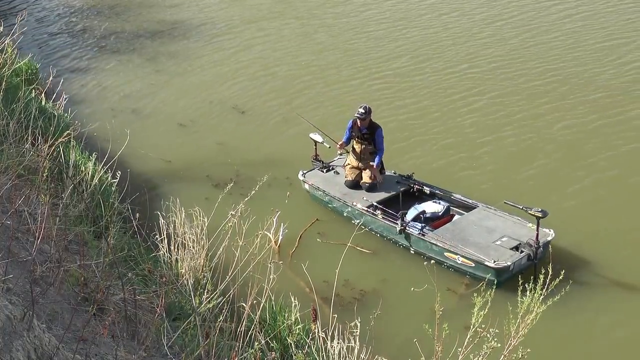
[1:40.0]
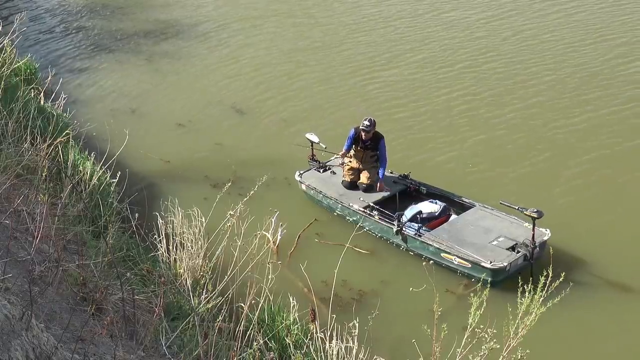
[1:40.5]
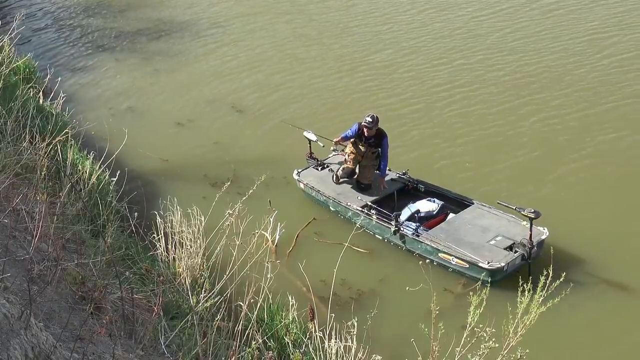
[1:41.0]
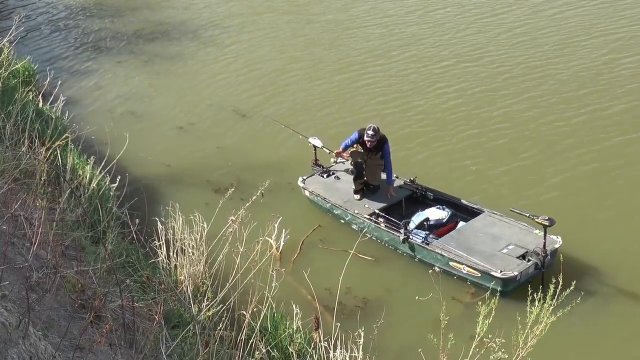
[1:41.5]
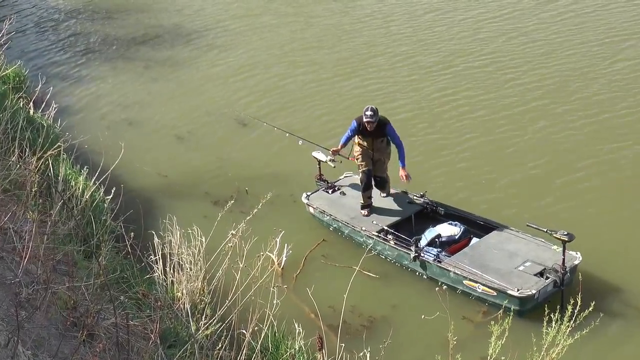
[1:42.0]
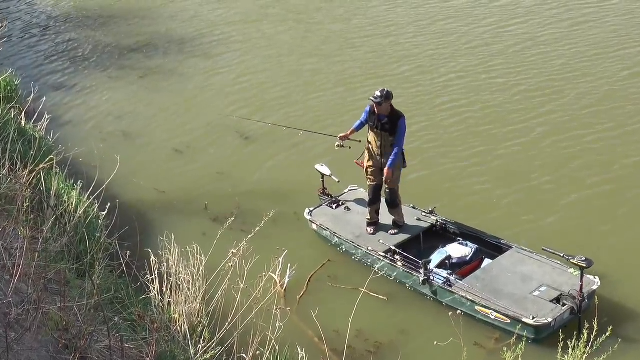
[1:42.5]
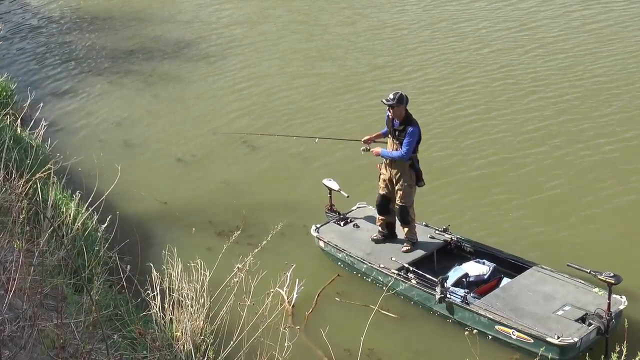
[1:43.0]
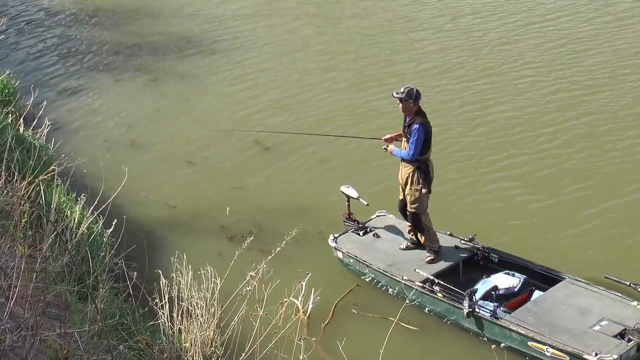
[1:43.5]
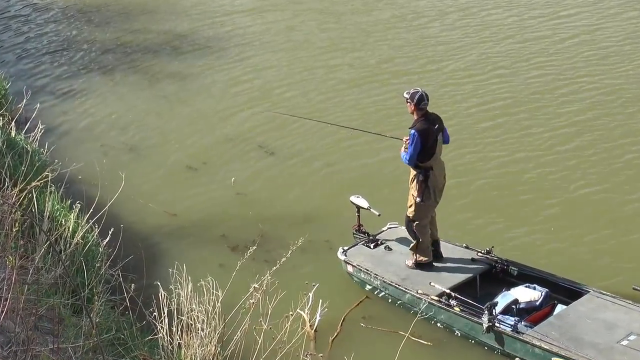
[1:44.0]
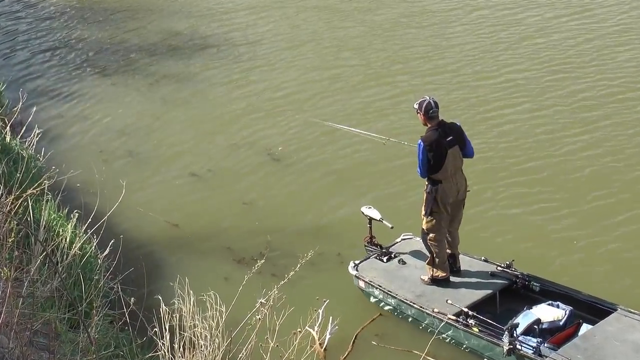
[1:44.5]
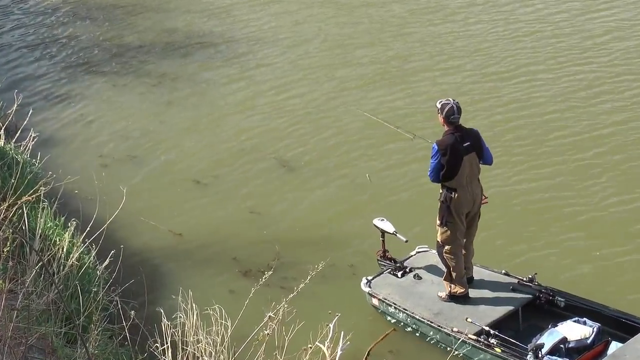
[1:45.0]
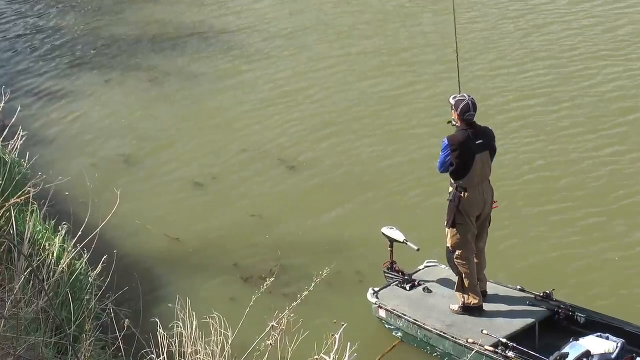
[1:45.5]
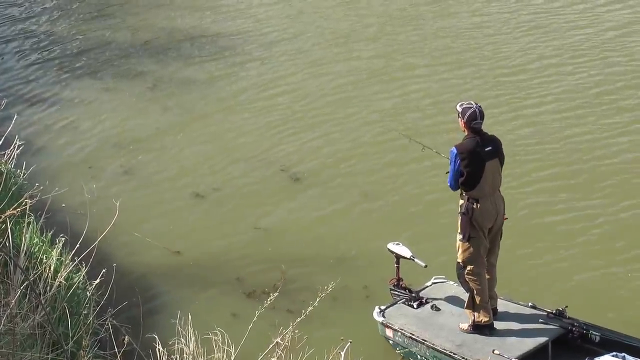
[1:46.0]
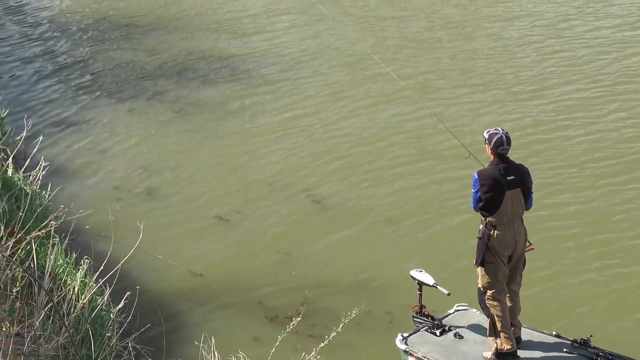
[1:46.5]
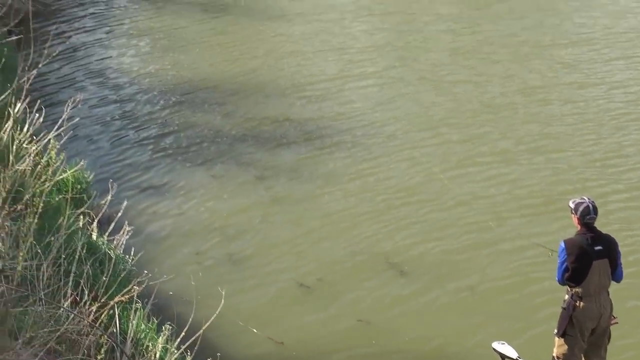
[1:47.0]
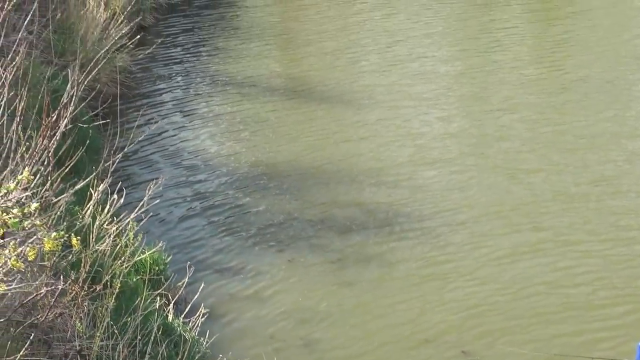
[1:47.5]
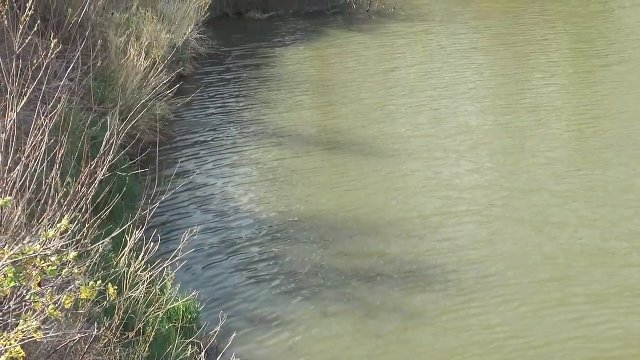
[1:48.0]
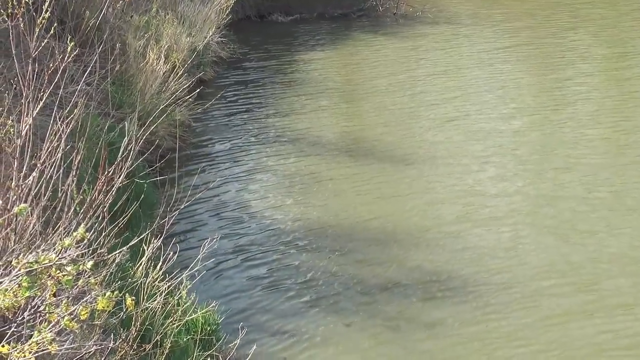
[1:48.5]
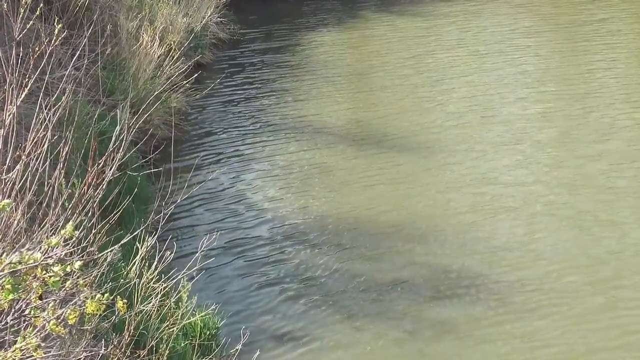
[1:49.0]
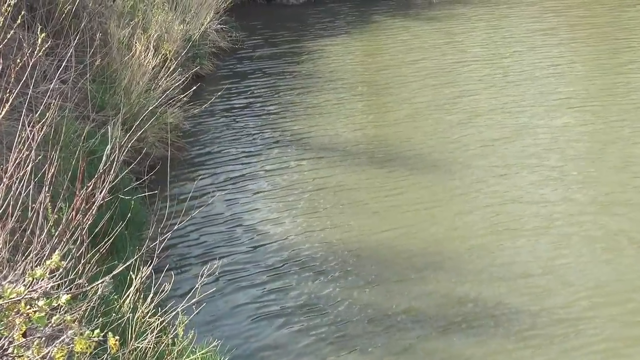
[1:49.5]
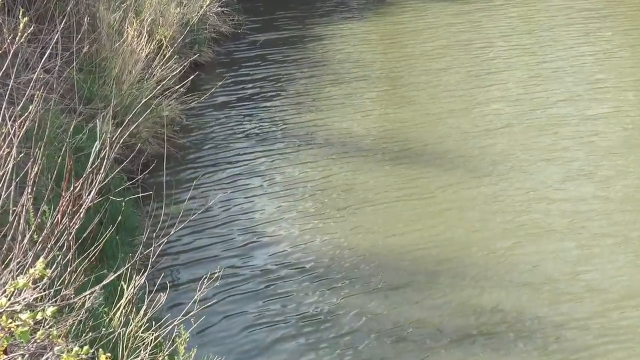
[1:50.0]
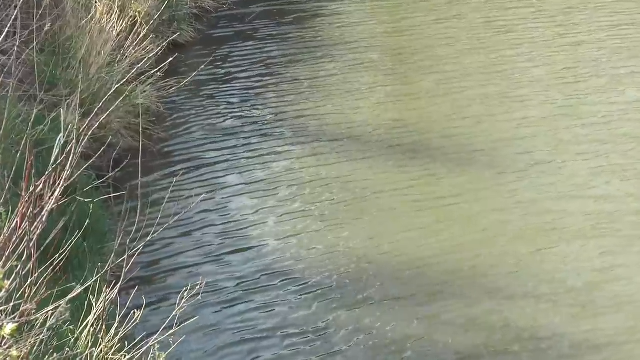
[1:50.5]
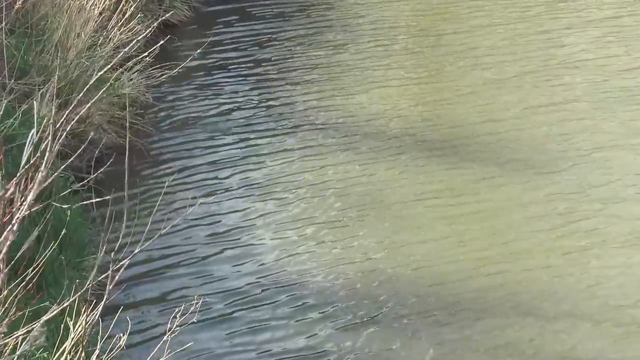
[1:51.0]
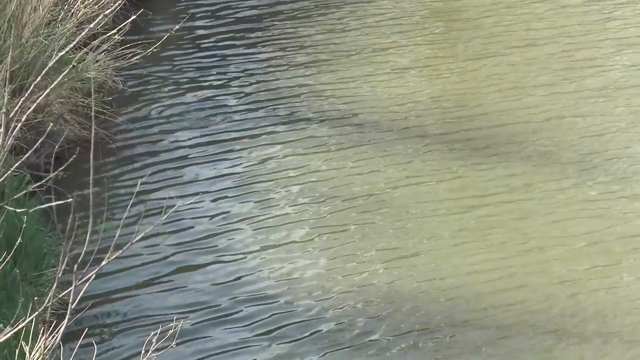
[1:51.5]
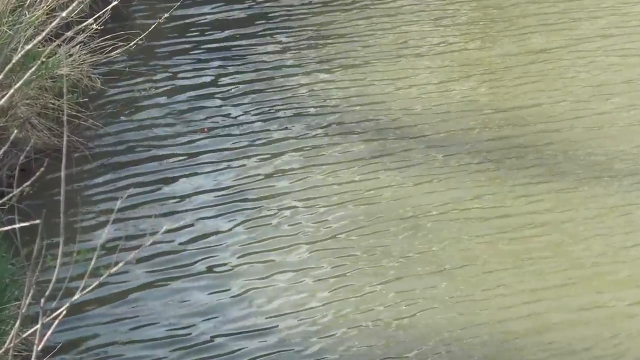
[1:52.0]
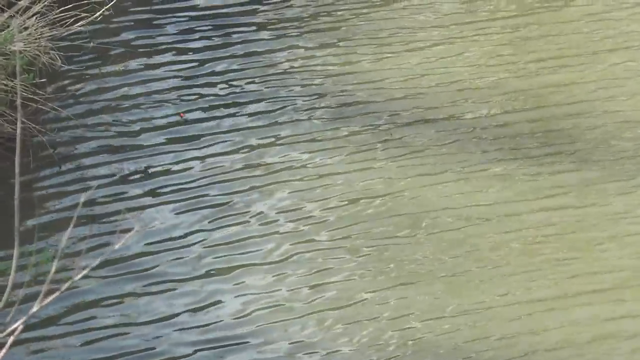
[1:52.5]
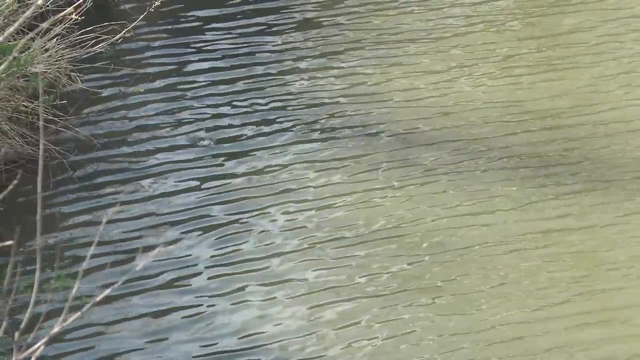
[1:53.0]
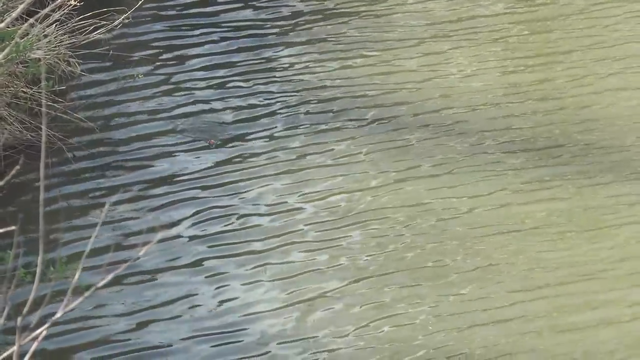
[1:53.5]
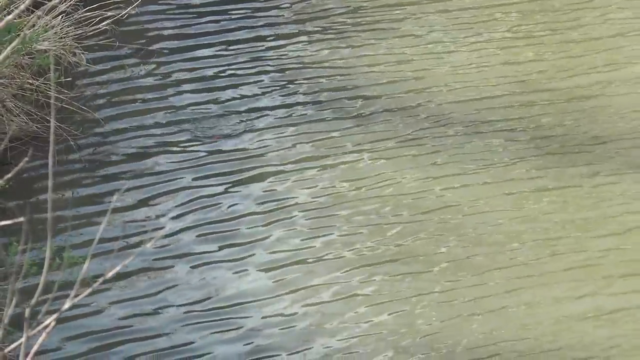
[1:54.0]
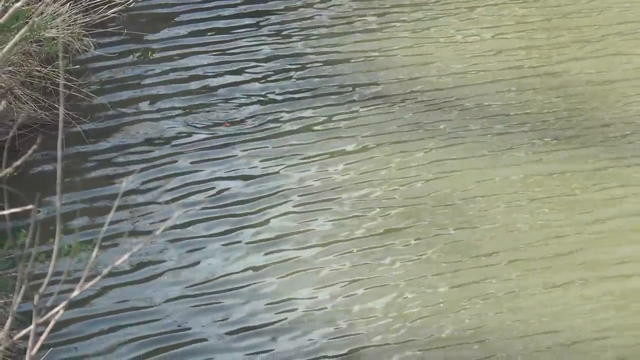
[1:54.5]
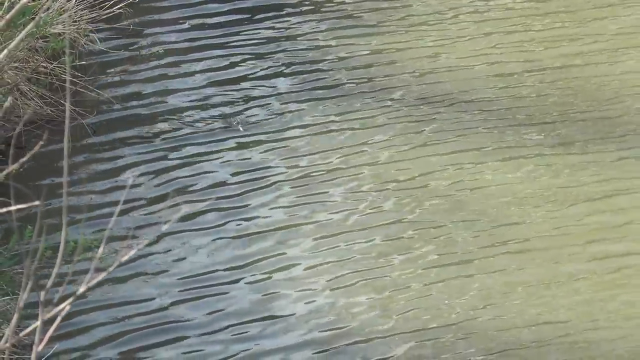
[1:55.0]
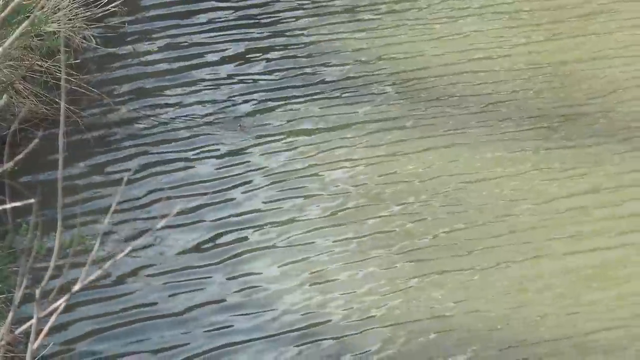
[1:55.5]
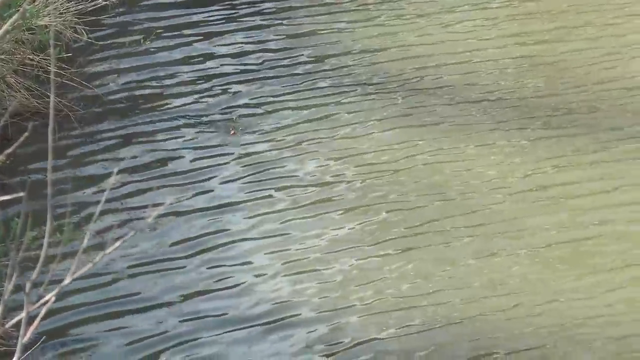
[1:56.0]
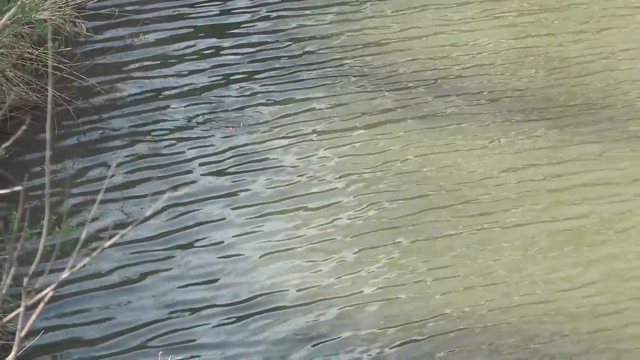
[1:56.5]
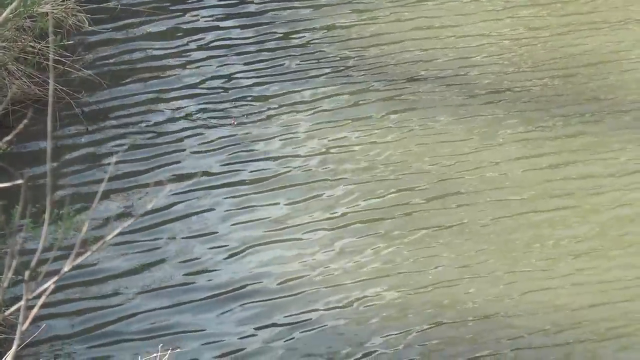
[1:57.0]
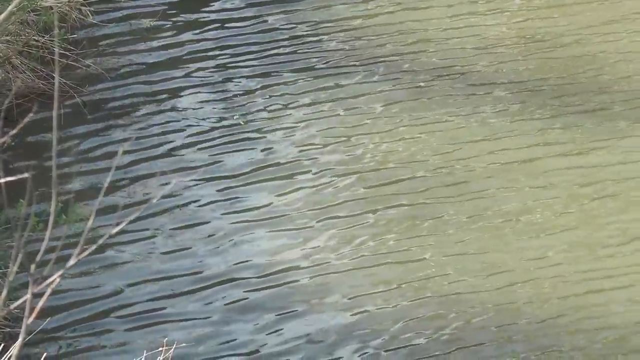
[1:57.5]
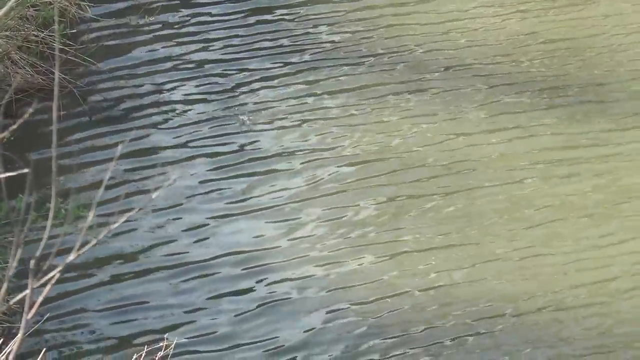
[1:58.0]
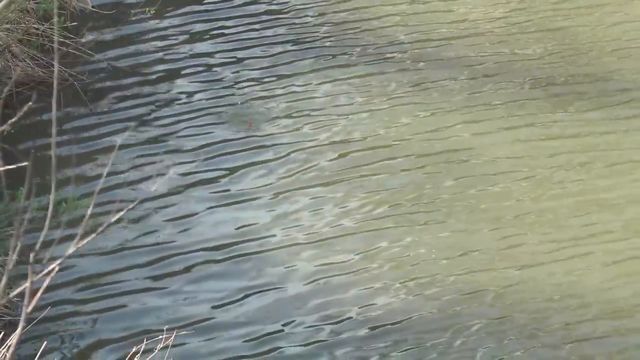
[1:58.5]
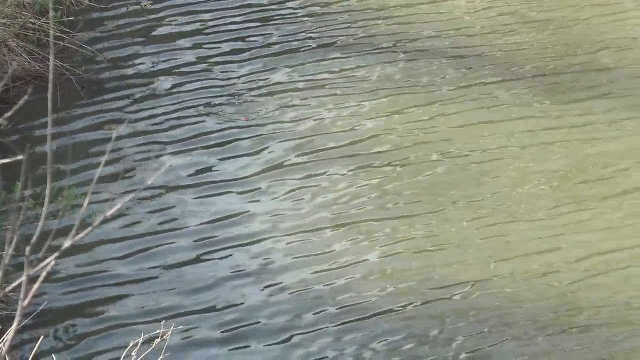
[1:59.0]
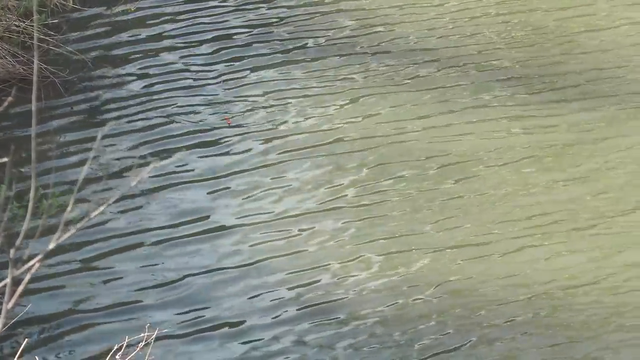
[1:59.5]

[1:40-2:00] The fisherman stands up from the kneeling position and casts his line again into the same shaded area of green, rippling water where the first fish was caught. Judging from the ripples, the tide appears to be moving away from him. The green water around him stands out against his gray boat, a flat-top john boat that is all gray. The flat top has probably five feet of flat surface at the end by the motor, where he kneels, and there looks like a motor at the other end with another five feet of flat top there. In between is a cutout where the boat is sunken in, wider than the opening of a kayak, where he could step in. The boat looks like it could be used for covert military operations on the water.